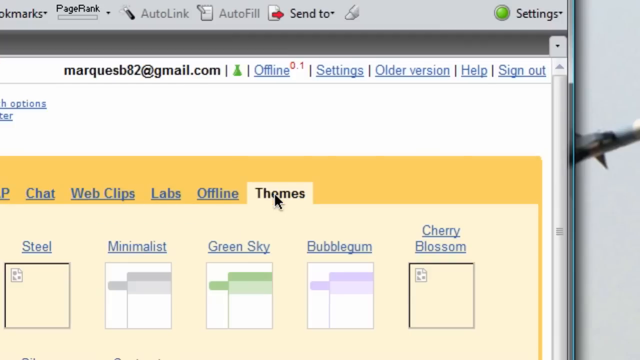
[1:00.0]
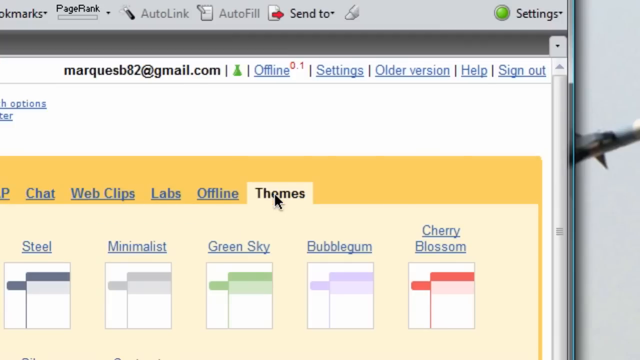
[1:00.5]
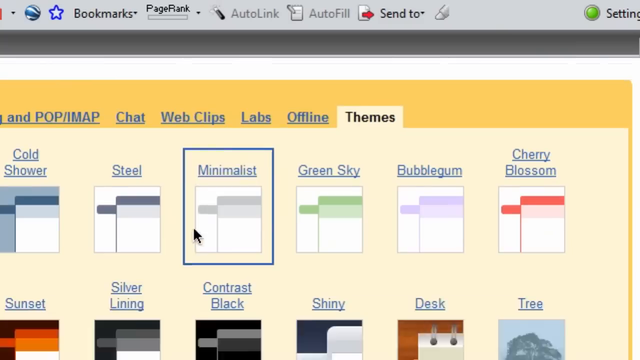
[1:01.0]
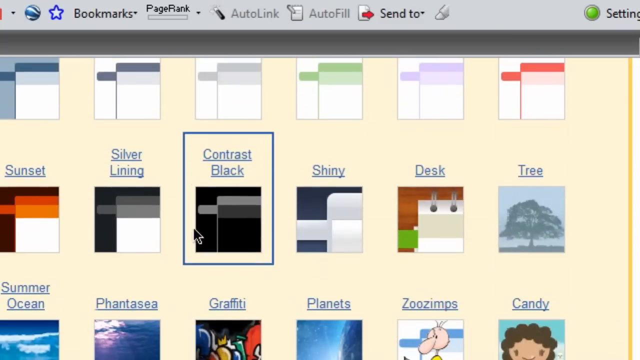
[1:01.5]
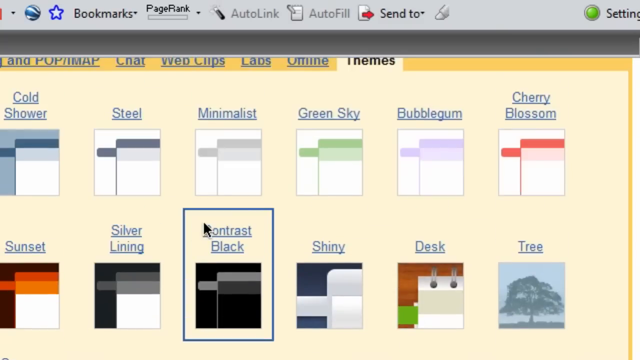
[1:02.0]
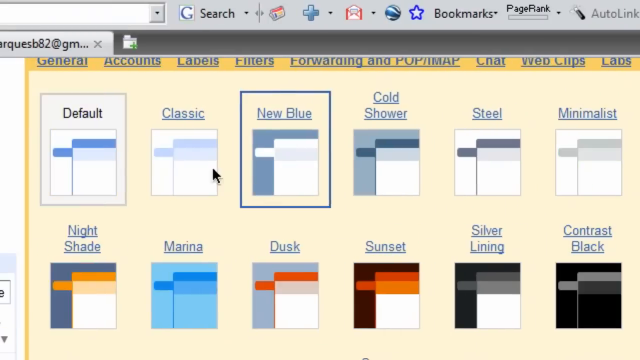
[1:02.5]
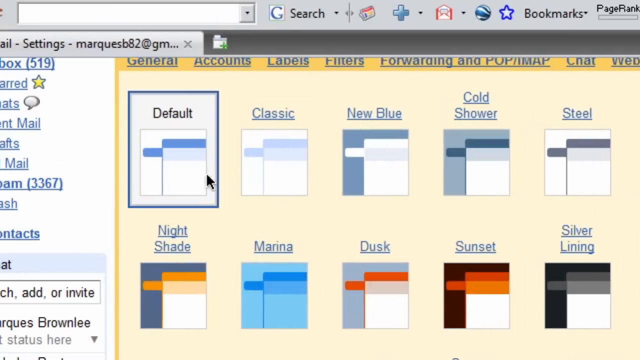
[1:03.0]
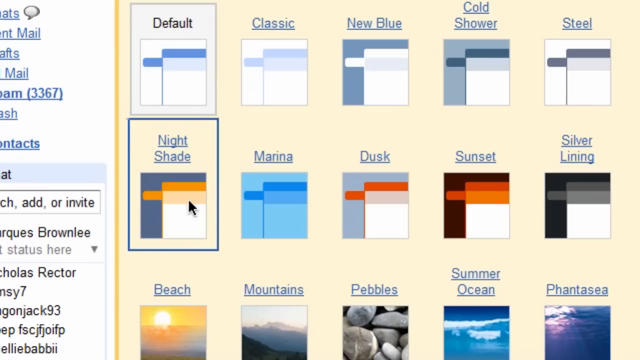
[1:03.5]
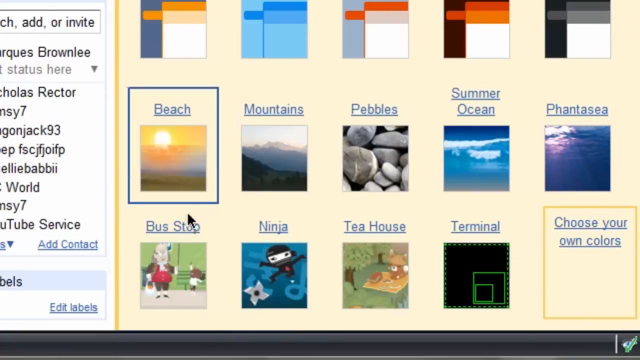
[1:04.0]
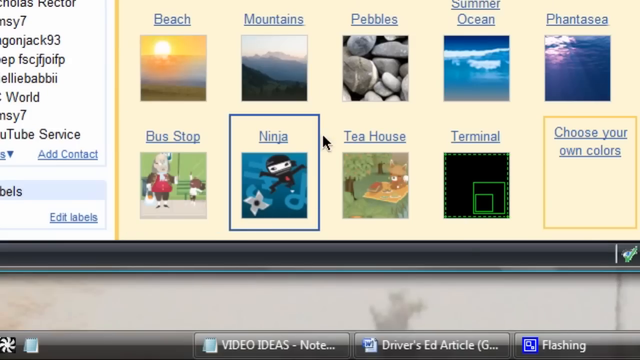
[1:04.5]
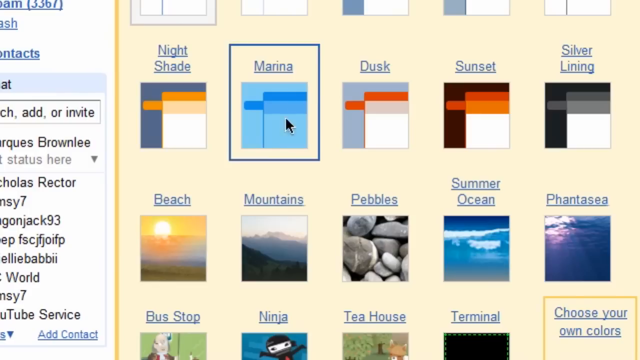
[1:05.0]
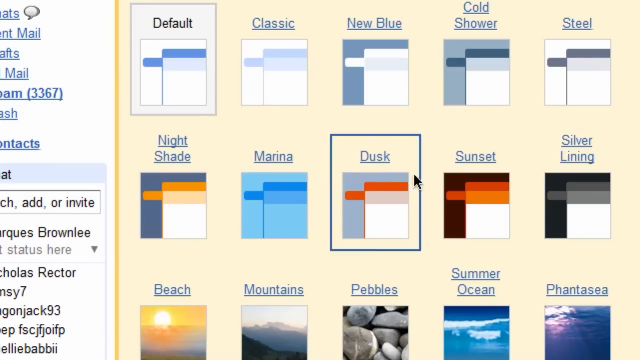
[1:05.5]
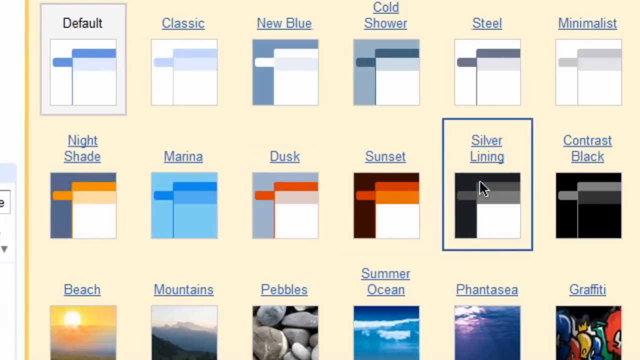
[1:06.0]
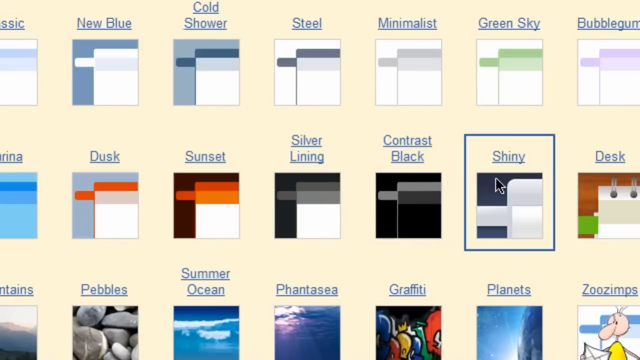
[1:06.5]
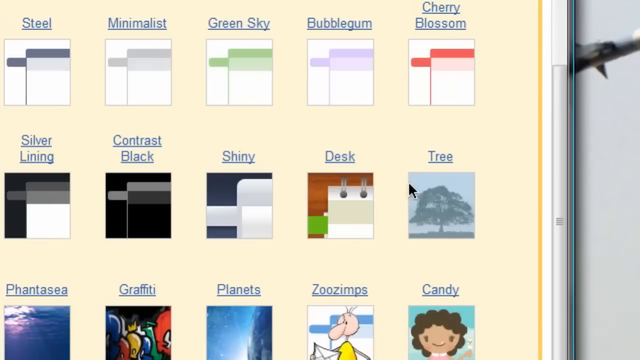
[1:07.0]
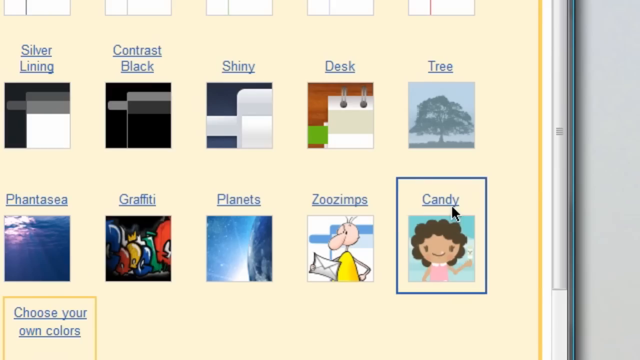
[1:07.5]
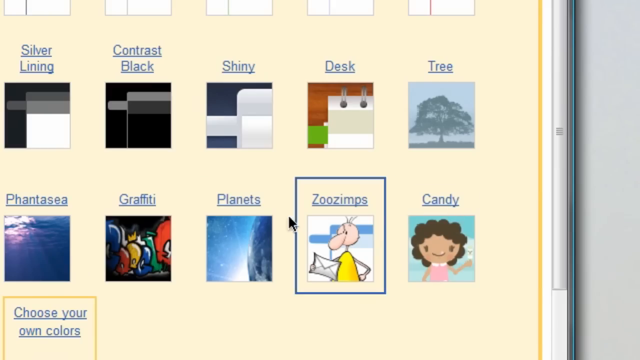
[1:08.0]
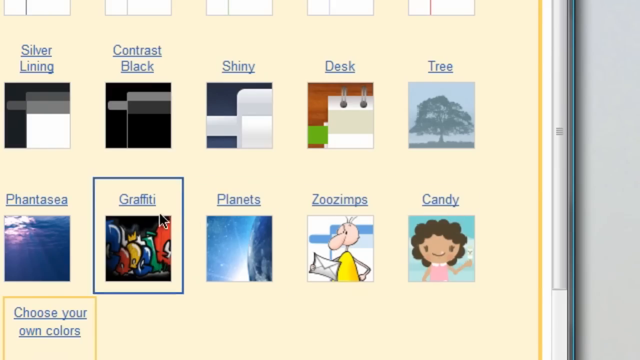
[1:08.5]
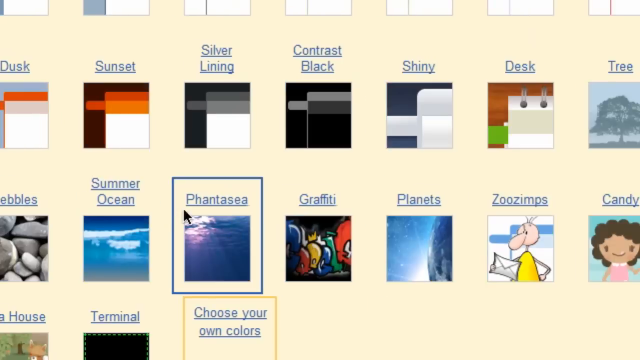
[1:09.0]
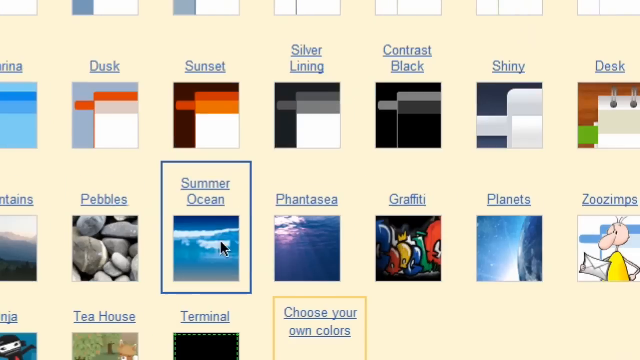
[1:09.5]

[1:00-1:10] The cursor flits quickly between what appear to be theme options. Some are just different colours, such as bubblegum, classic, new blue and steel, while more fun ones at the bottom of the screen include ninja, beach and graffiti. Because the cursor moves so quickly between the themes, it is very hard to see what is happening; the user apparently is not selecting a theme but showing what is available.